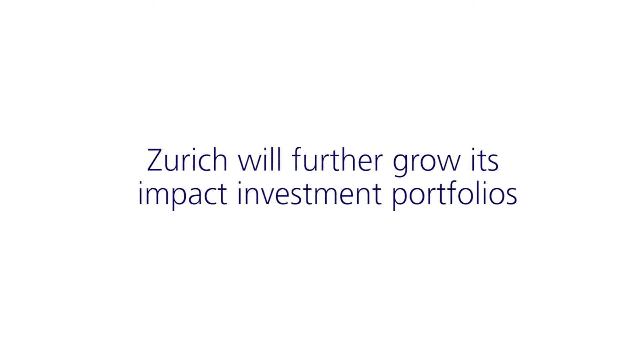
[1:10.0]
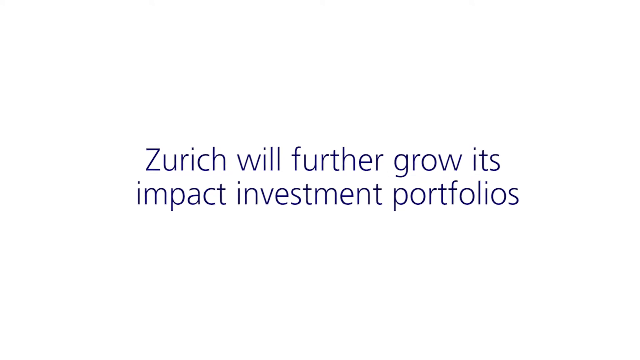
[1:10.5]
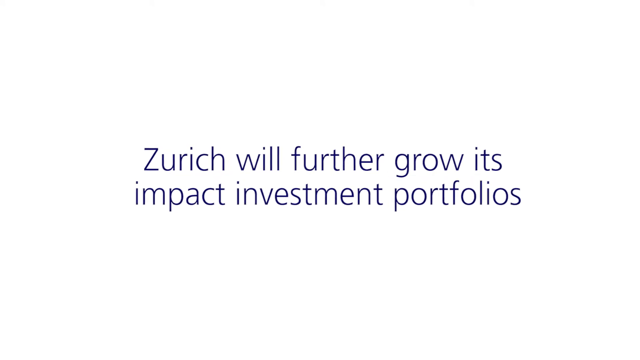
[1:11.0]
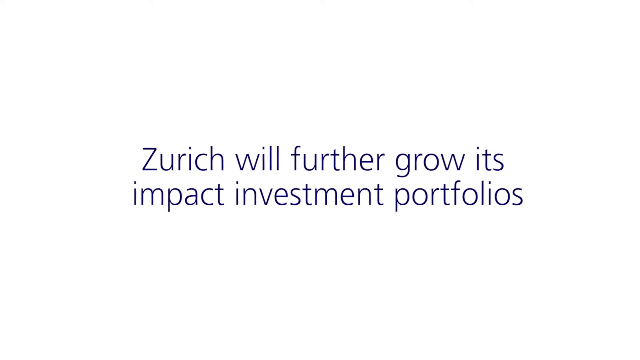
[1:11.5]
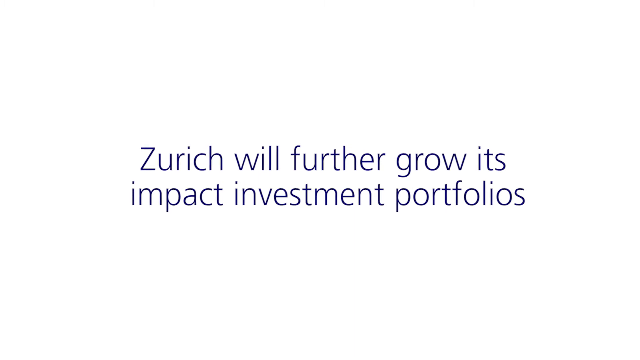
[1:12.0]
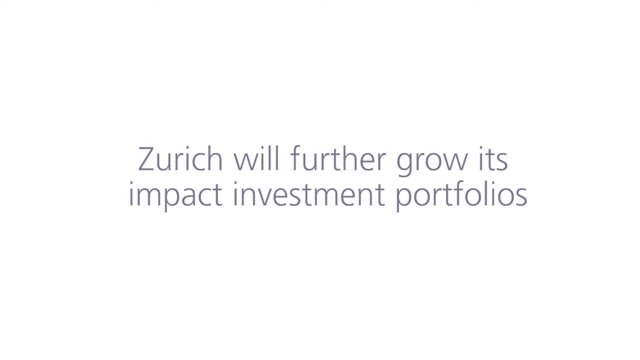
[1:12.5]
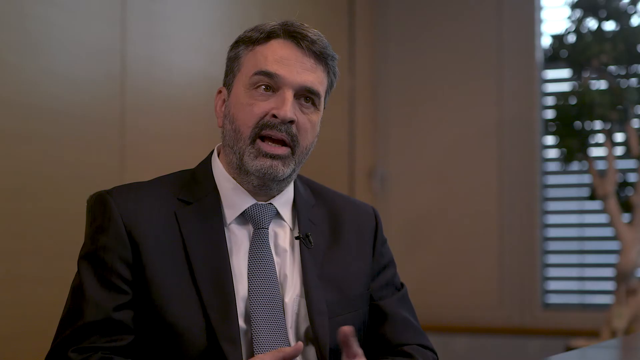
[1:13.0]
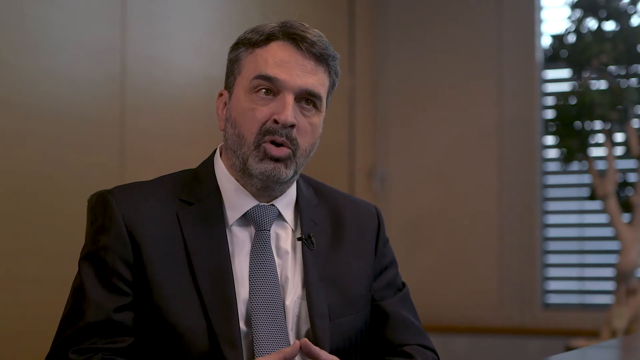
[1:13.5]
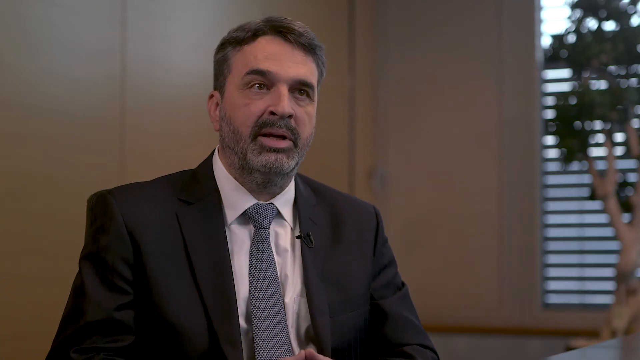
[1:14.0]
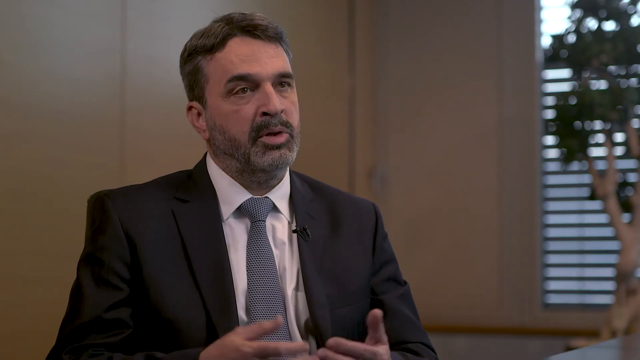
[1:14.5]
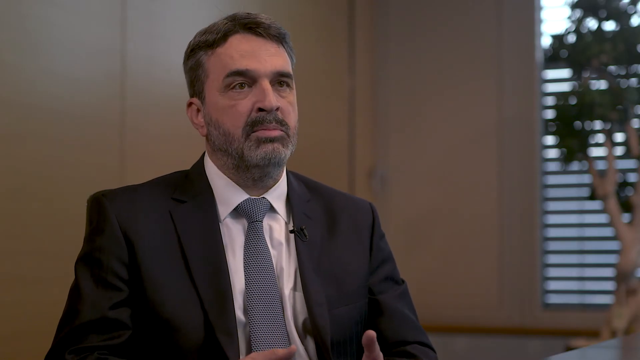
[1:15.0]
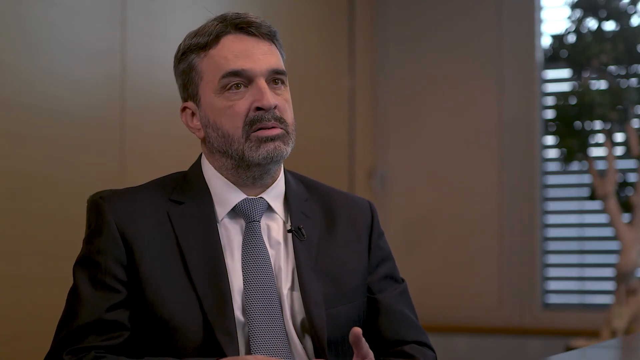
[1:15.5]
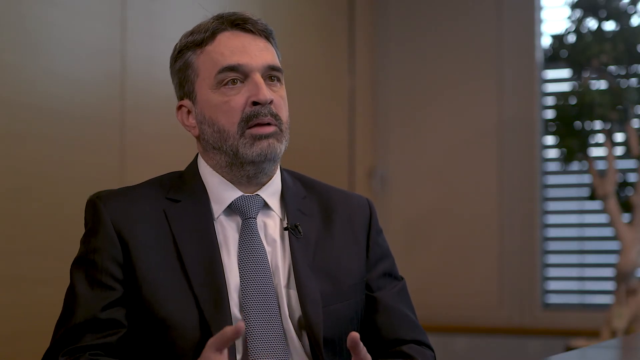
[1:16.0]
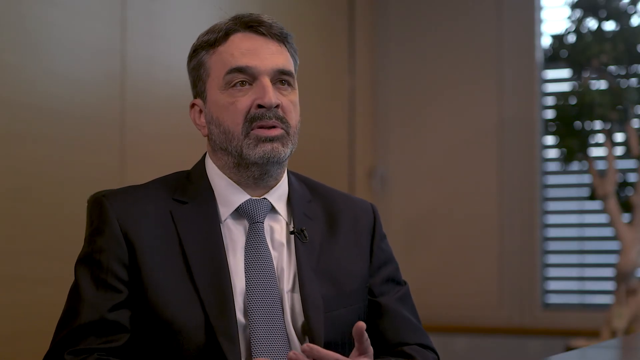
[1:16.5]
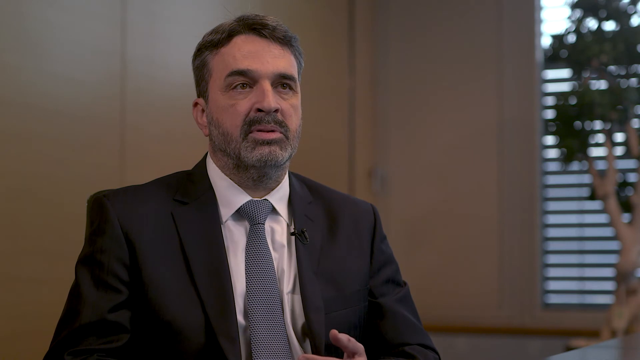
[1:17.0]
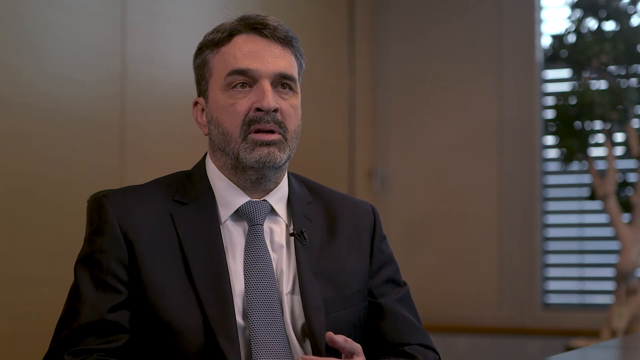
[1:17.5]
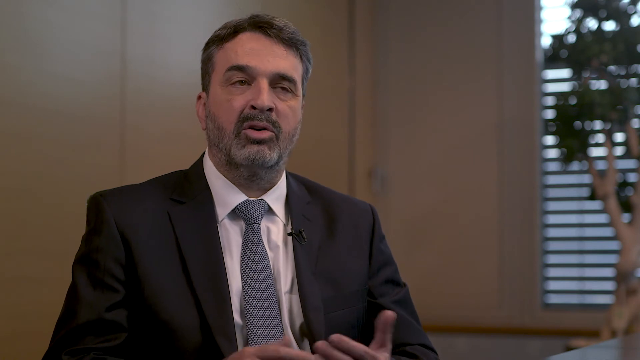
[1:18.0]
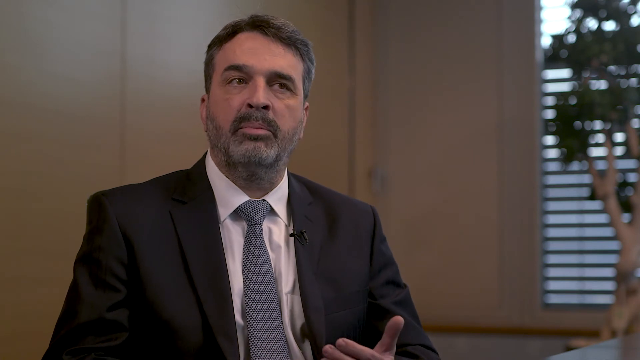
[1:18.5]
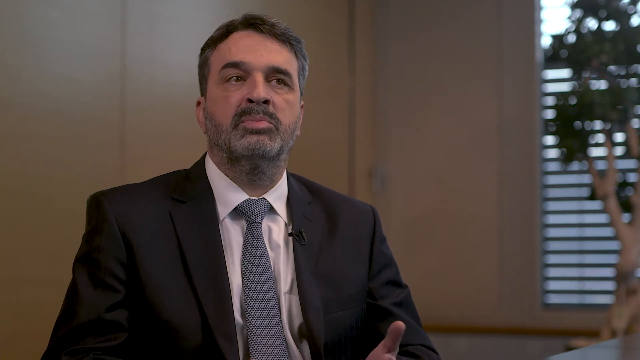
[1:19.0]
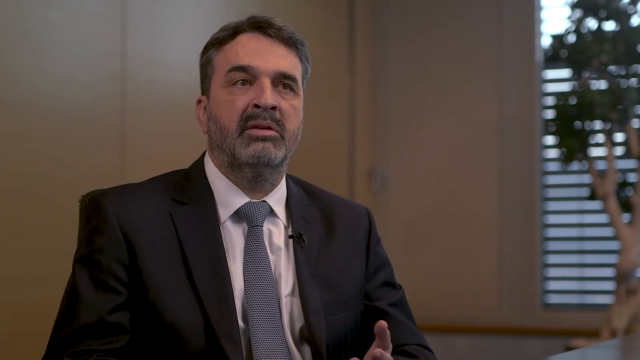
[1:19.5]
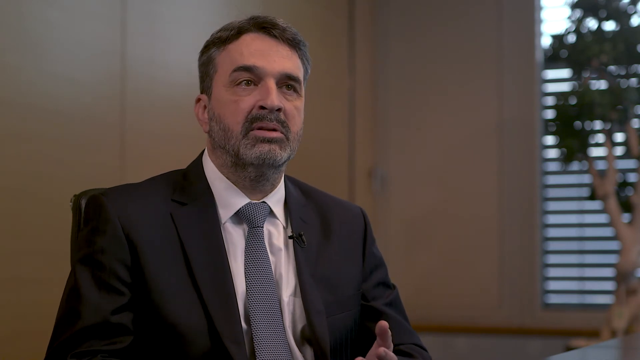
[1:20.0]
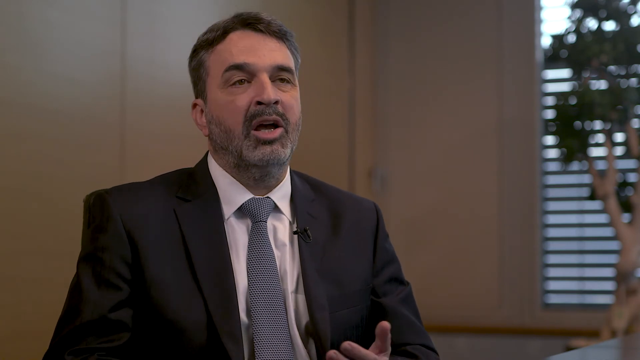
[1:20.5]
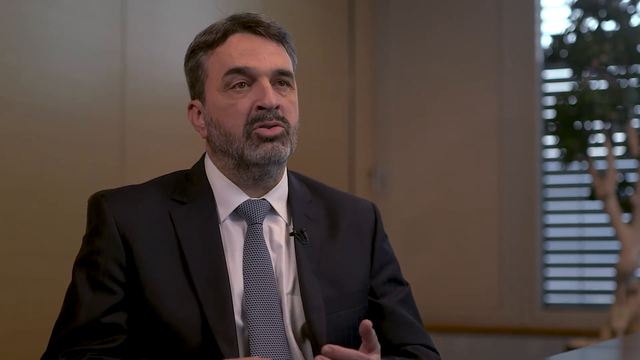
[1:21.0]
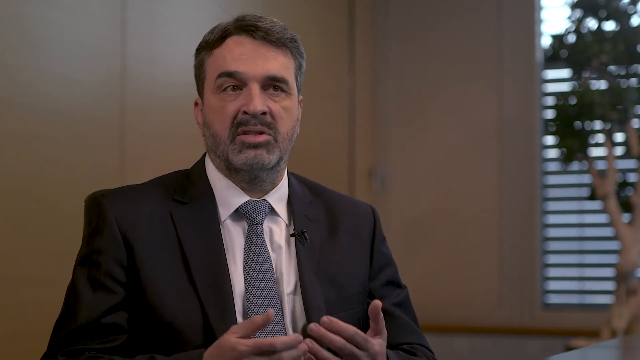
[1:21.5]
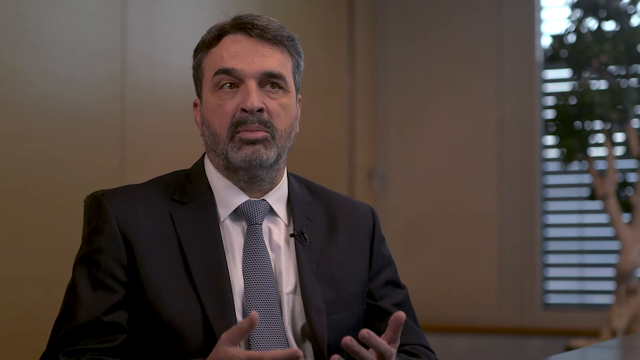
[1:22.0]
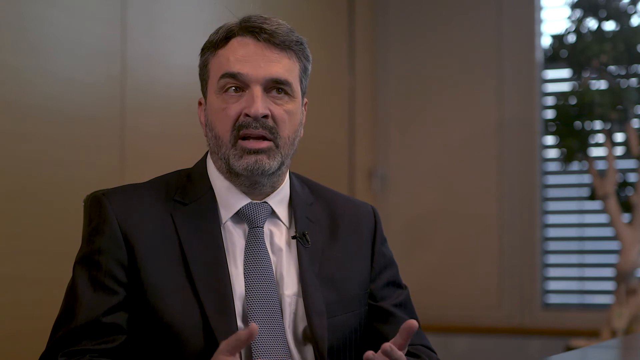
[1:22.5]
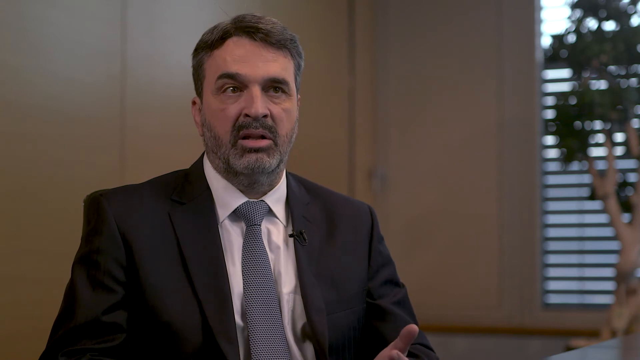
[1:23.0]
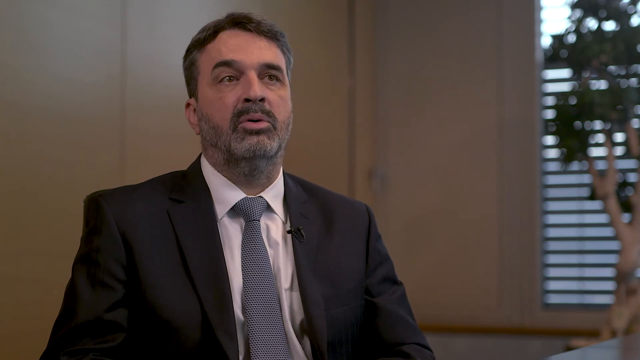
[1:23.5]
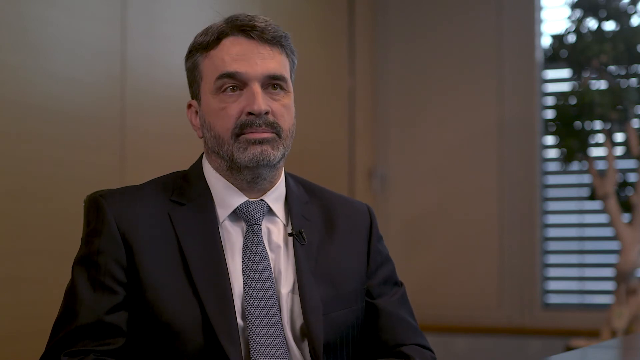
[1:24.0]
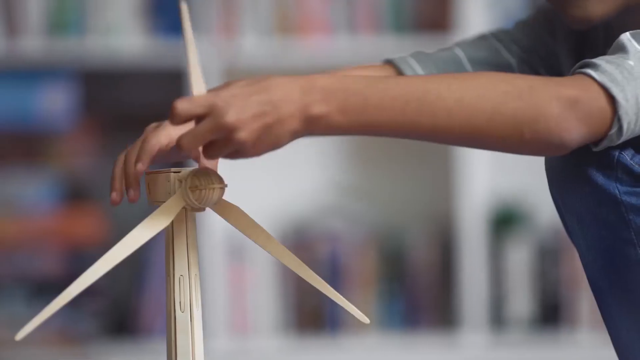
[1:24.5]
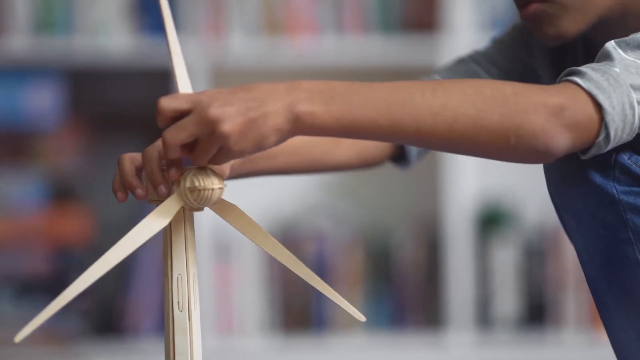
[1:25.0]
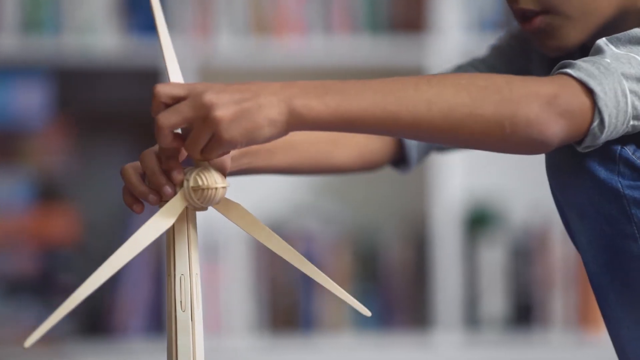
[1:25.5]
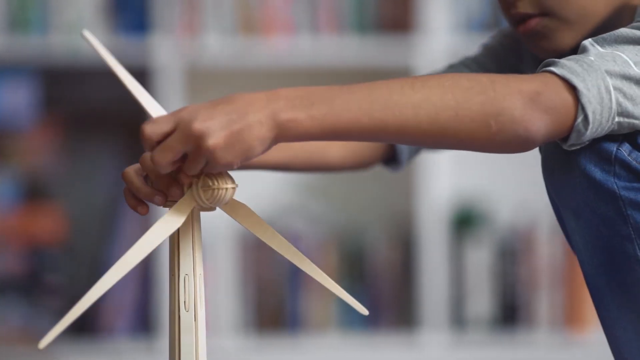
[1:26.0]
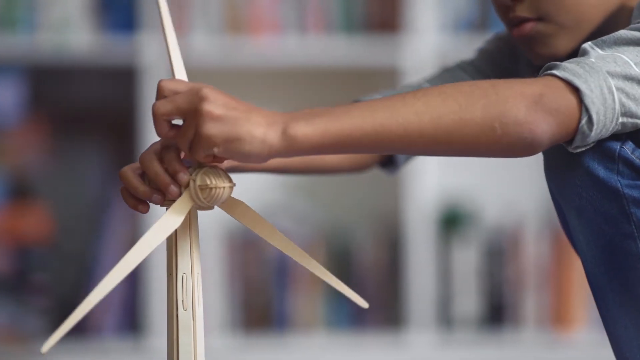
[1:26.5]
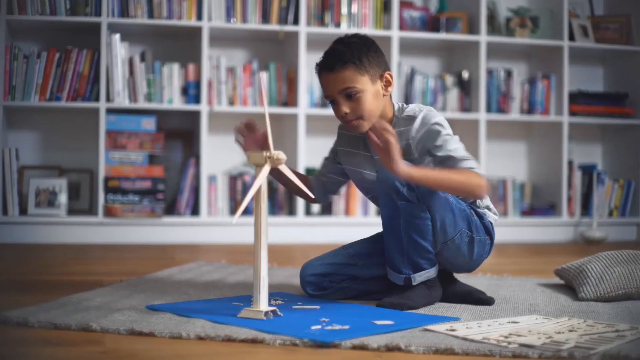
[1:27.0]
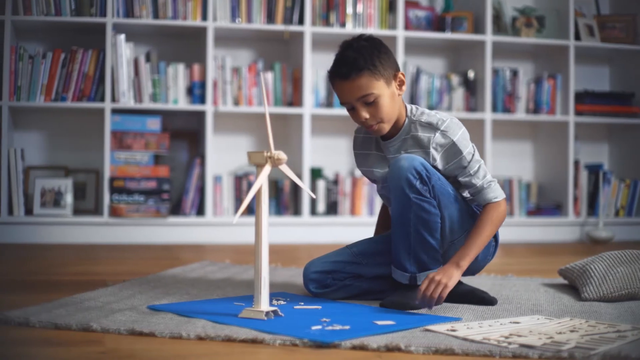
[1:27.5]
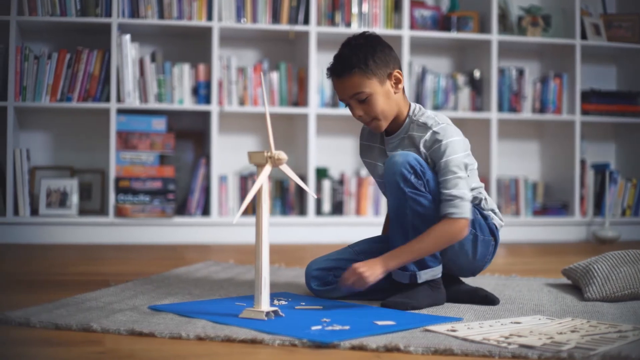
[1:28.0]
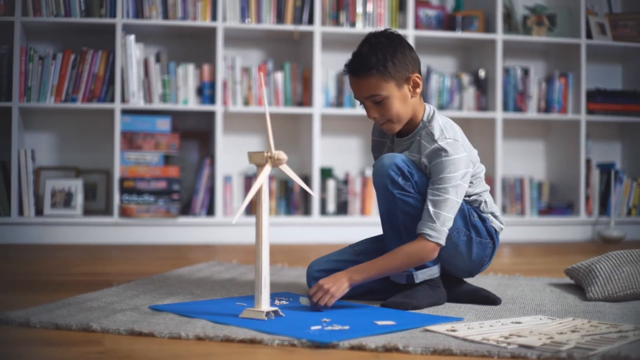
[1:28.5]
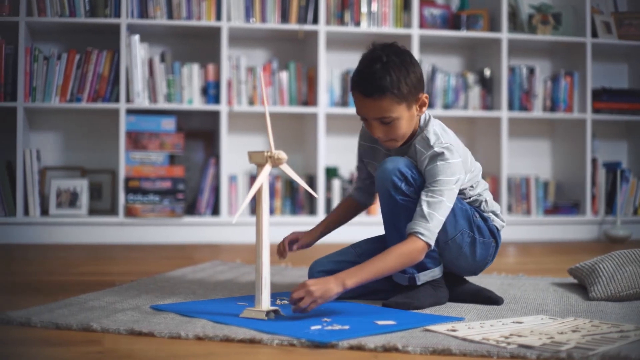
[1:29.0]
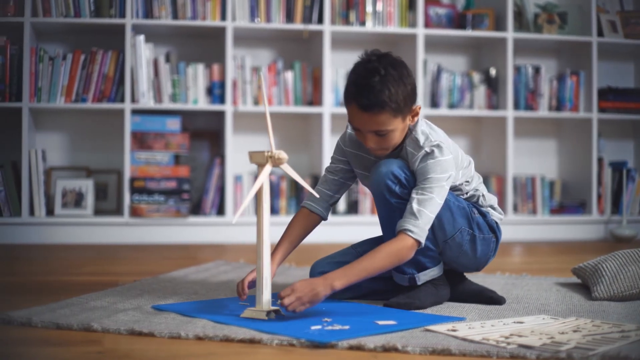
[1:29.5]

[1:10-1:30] On a white background, "Zurich will further grow its impact investment portfolios" is written in violet in the middle of the screen, and the view zooms in on the message. The scene then changes to the man speaking to the interviewer. He gestures with his left hand, palm facing up, moving it up and down, and looks directly into the interviewer's eyes. His eyes look intense and piercing, and his expression looks genuine, as though he believes in everything he is saying.